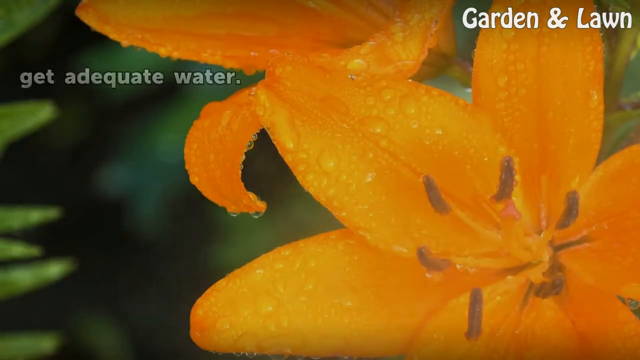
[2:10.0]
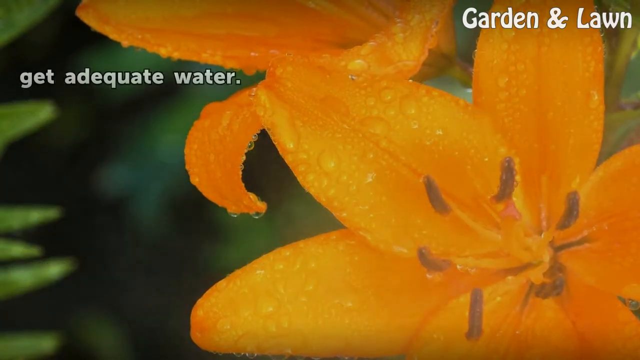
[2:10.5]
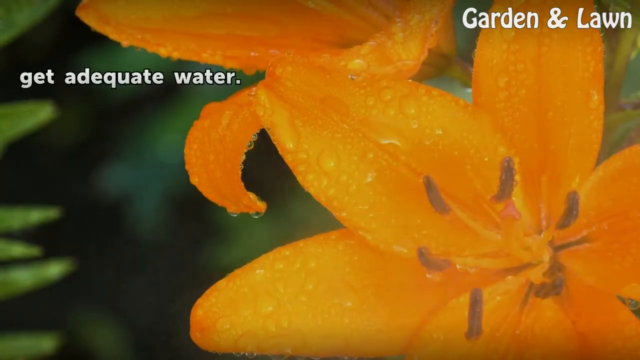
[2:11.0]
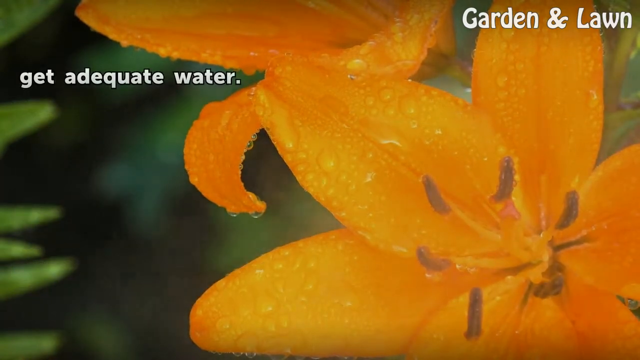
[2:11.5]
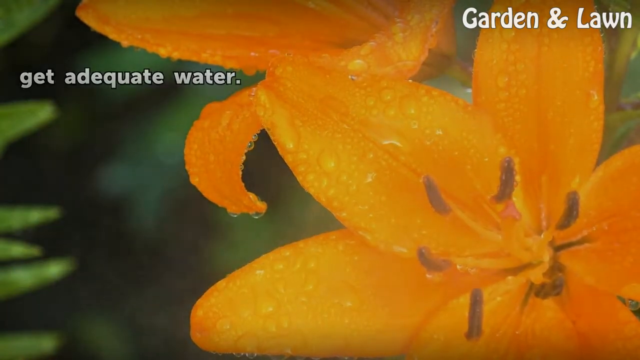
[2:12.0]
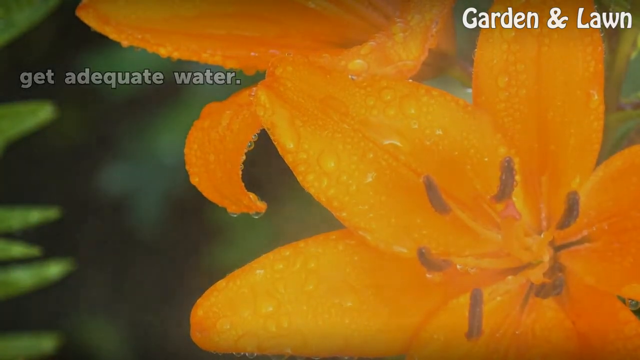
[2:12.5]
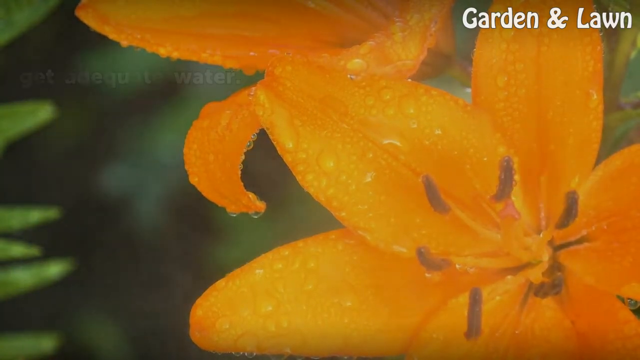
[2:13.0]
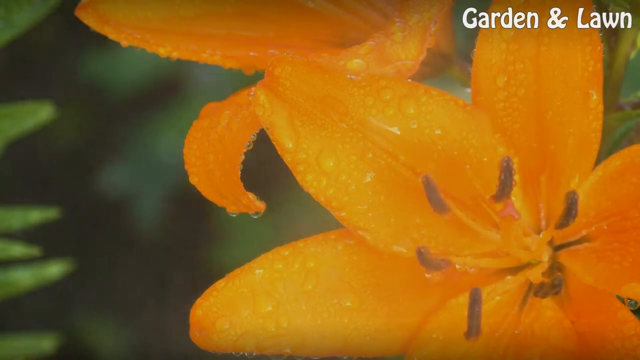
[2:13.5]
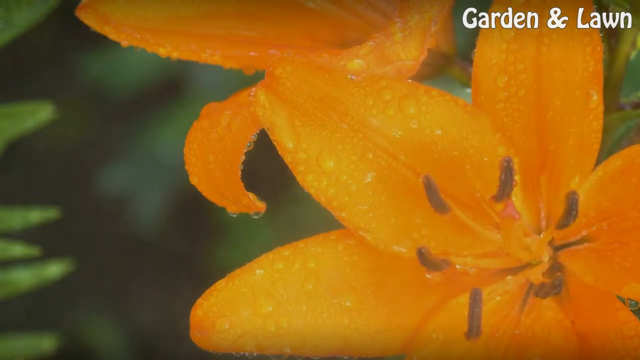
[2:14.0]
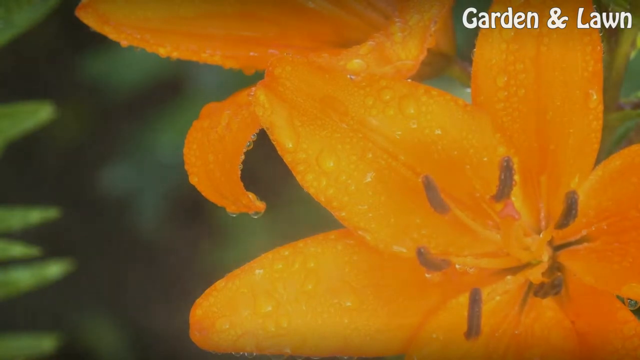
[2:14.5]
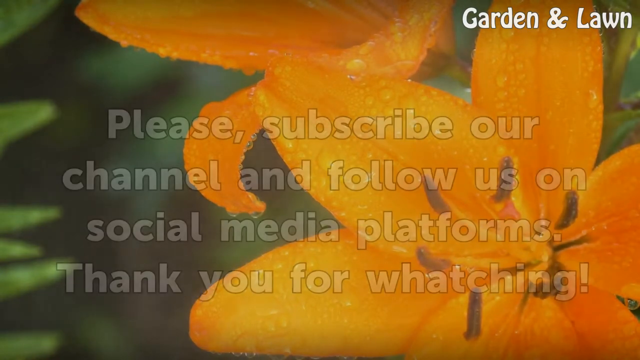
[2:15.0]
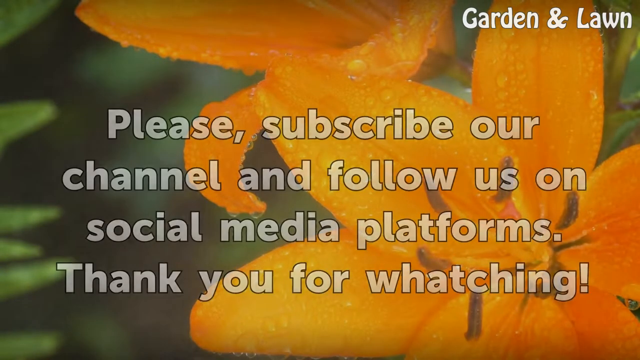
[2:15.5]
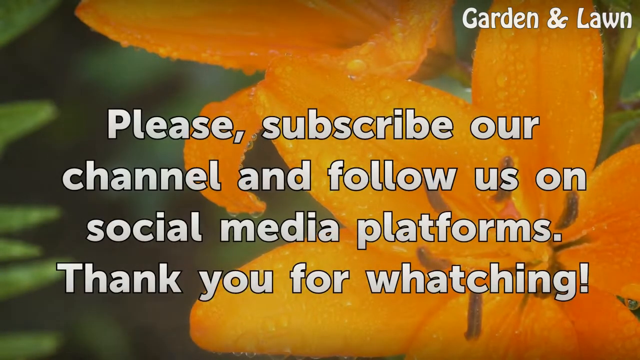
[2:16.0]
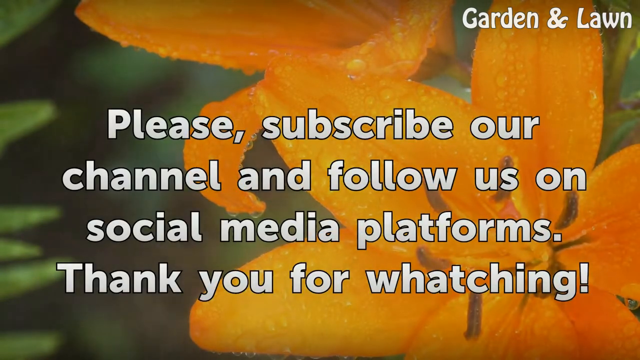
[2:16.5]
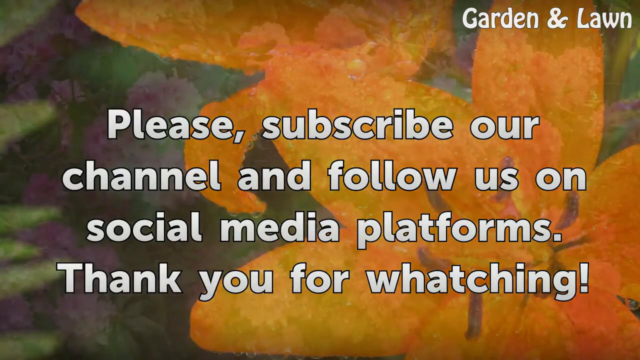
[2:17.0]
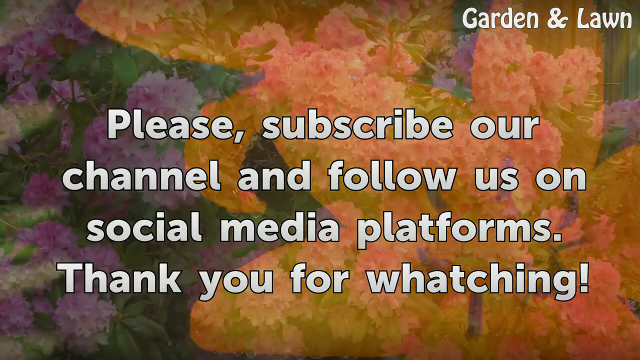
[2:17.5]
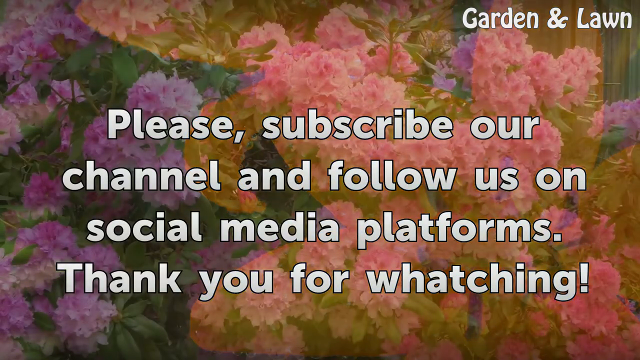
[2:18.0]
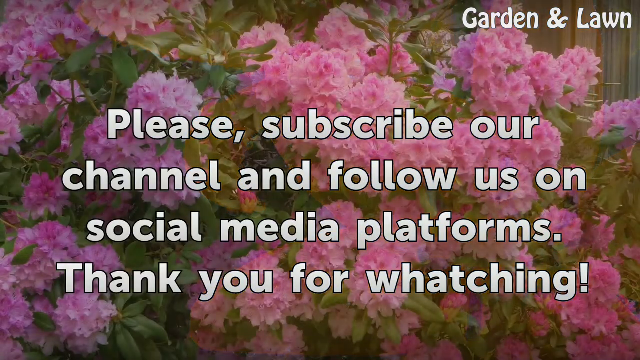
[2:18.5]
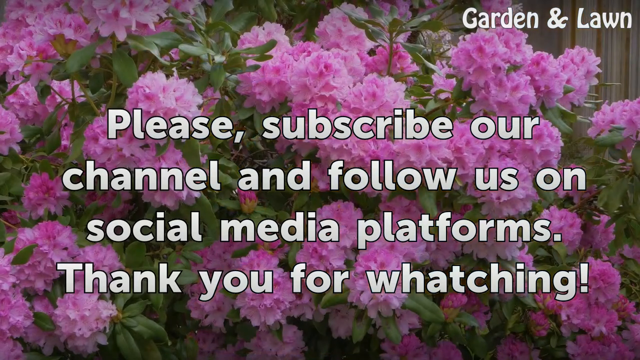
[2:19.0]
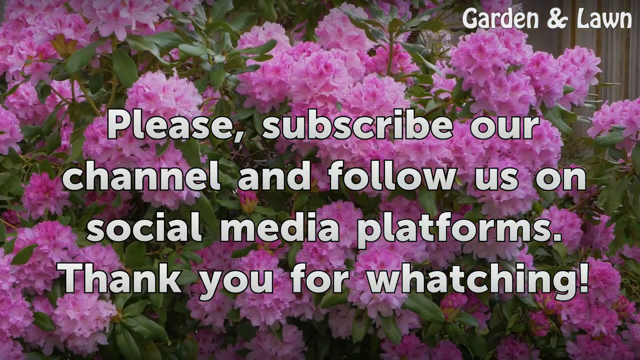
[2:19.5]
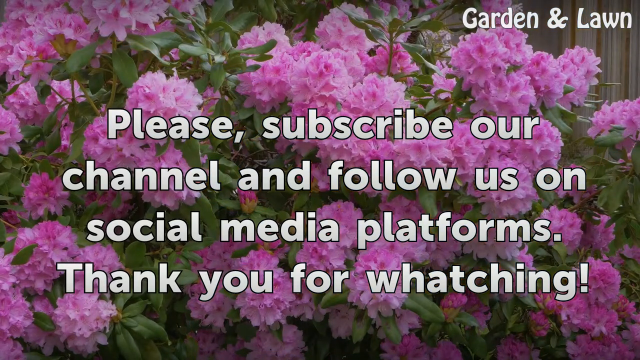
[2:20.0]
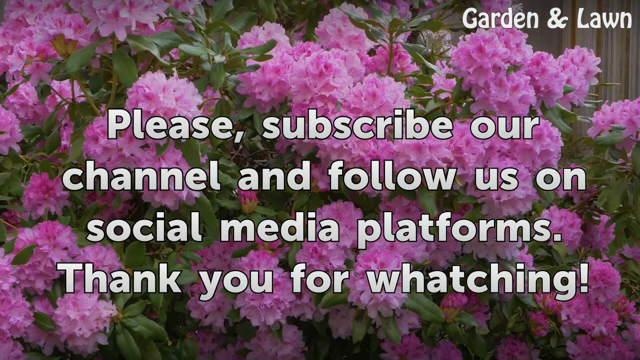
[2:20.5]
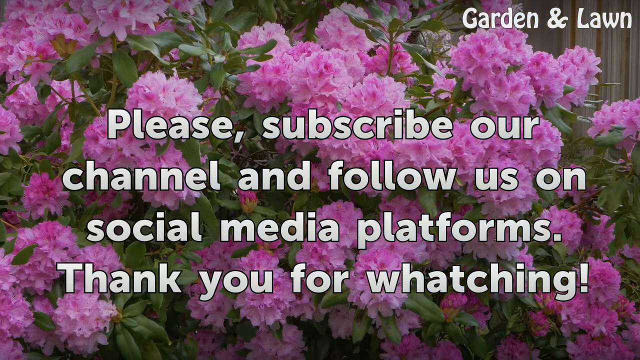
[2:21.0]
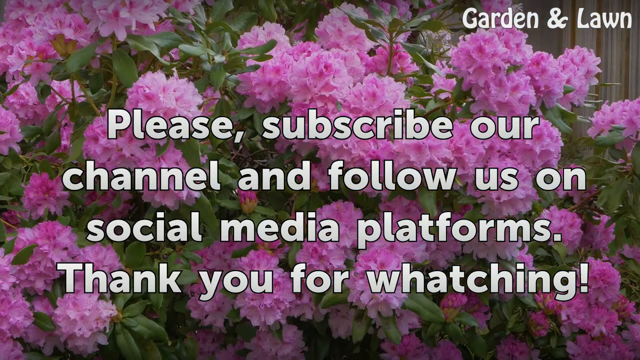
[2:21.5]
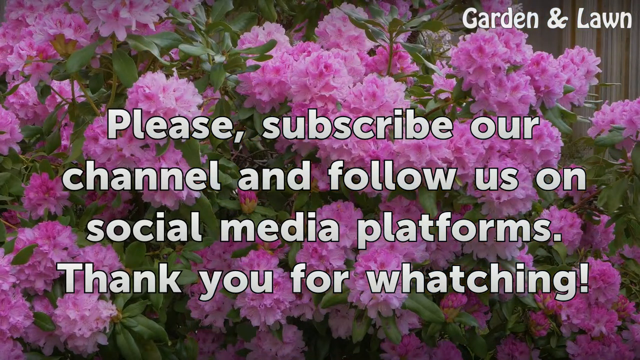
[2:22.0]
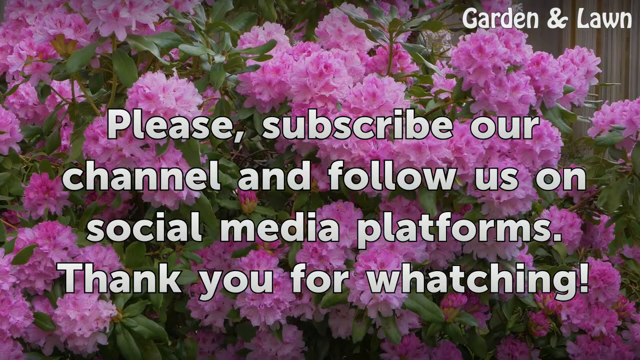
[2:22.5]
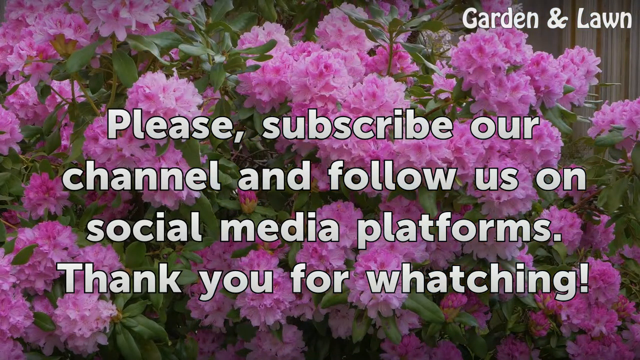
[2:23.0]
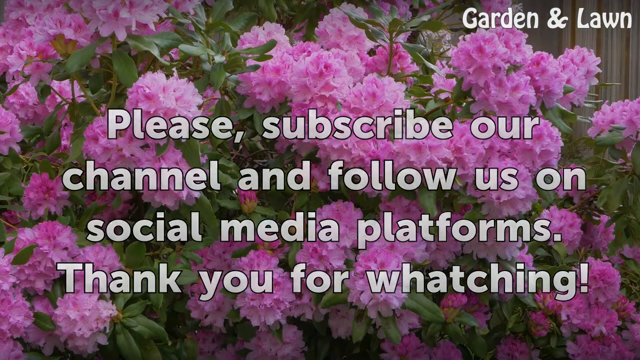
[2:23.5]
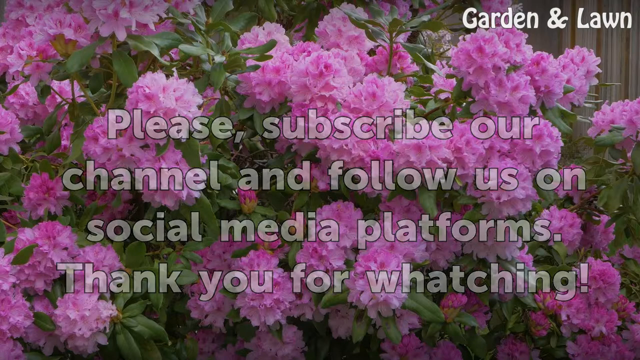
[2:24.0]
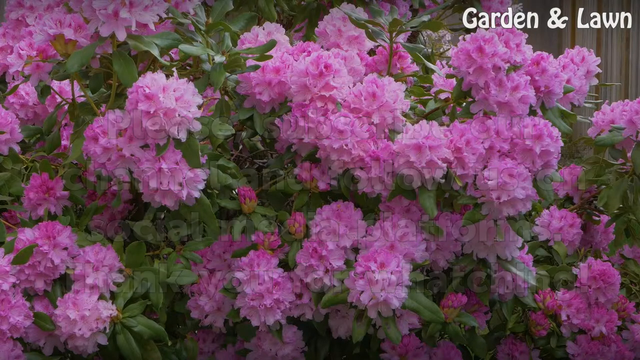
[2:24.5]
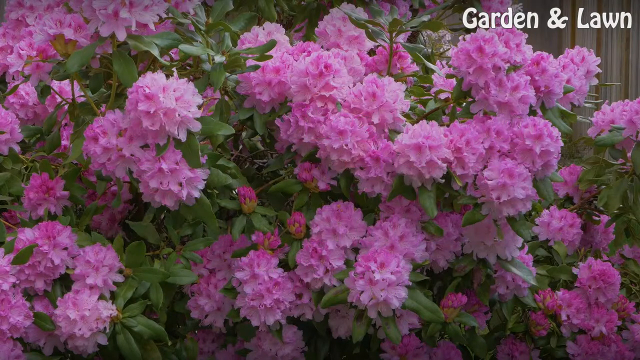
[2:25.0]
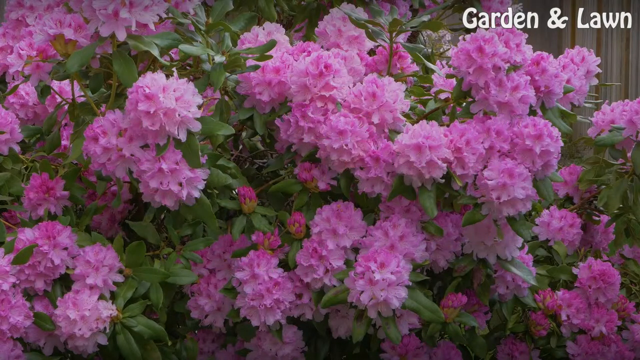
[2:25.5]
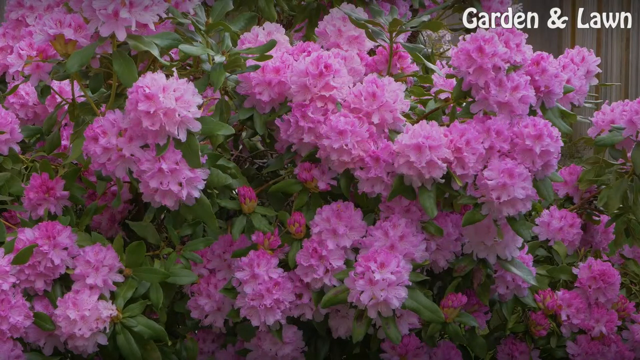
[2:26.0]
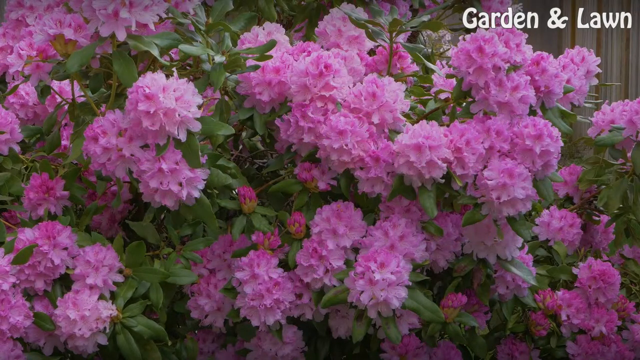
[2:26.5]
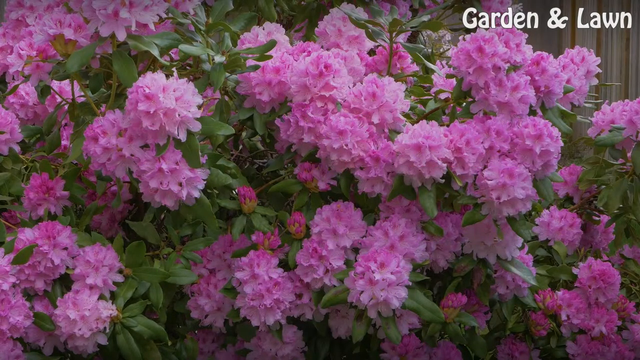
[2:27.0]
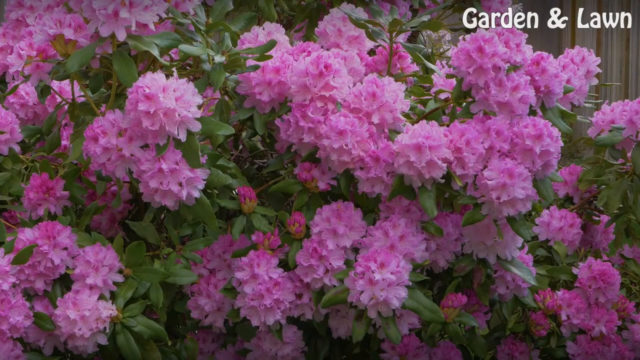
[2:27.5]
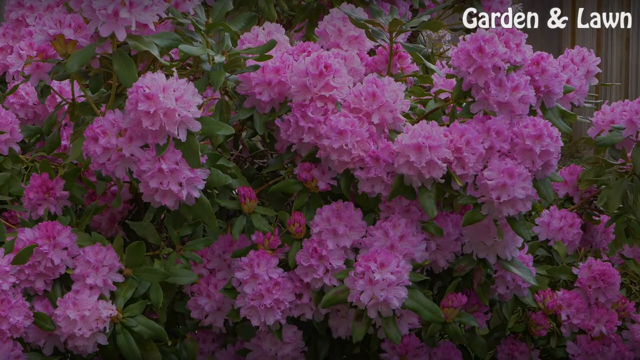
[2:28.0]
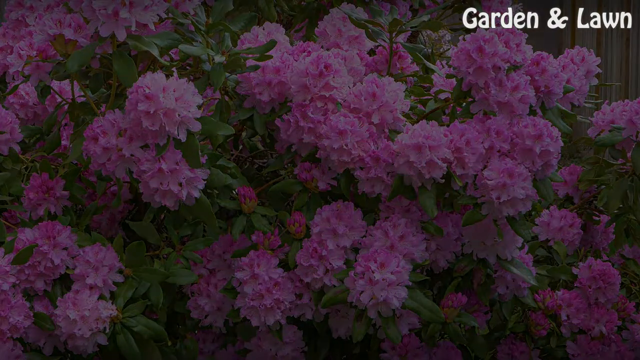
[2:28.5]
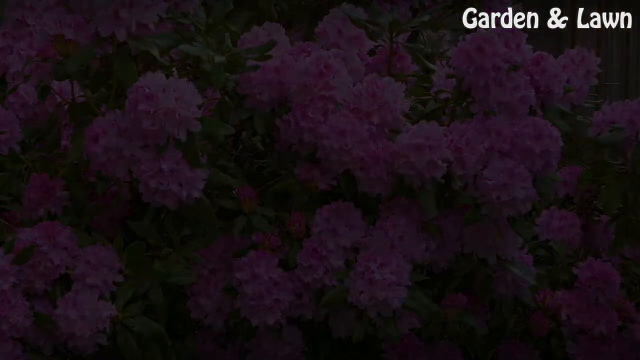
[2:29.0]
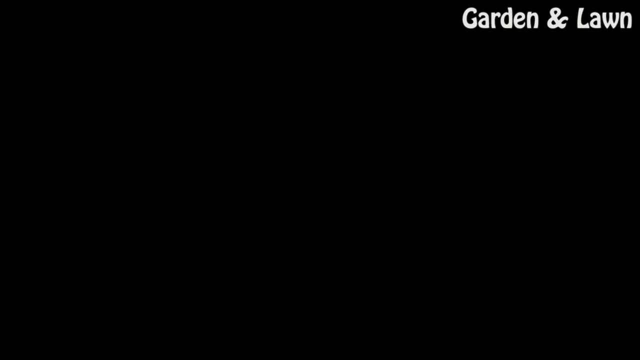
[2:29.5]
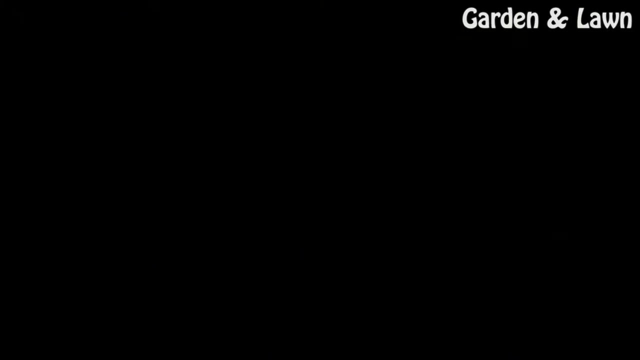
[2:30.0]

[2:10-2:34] Footage of a vibrant orange lily is in the background, with the text "Garden and Lawn" in the upper right-hand corner throughout. In the upper left of the screen, white text with a black outline reads "Get adequate water". After a moment, this text fades out, revealing more of the footage, and is replaced by larger text, also white with a black outline, reading "Please subscribe to our channel and follow us on social media platforms. Thank you for watching!" This lingers for a few moments before the footage switches to what appears to be a massive amount of pinkish-purple azalea flowers all over the screen. The text lingers for a few moments before slowly fading out, leaving only the picture of the flowers. The flowers remain on screen for a few more moments without the text, and then the screen gradually fades to black.